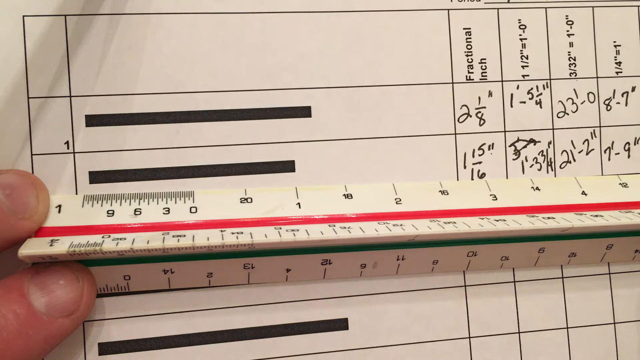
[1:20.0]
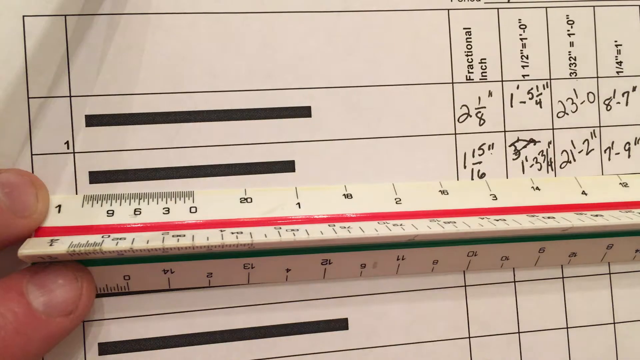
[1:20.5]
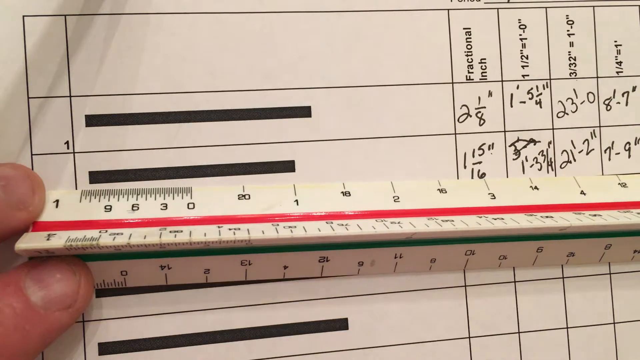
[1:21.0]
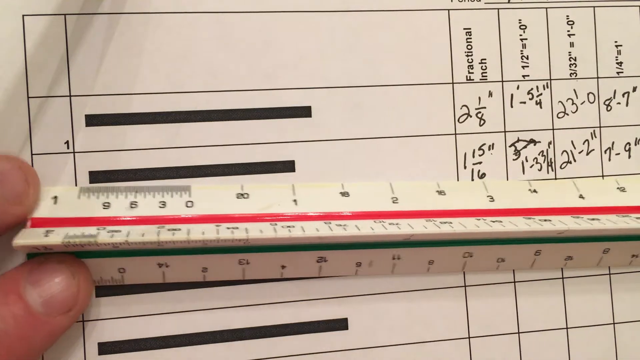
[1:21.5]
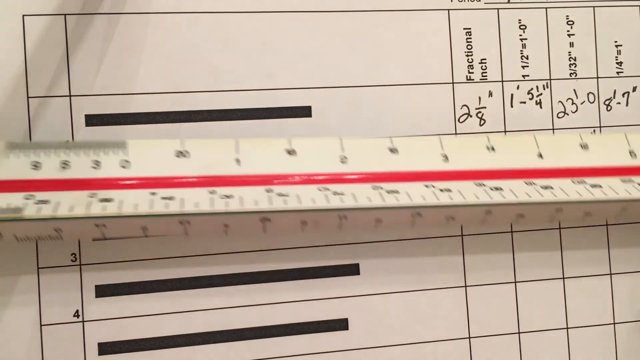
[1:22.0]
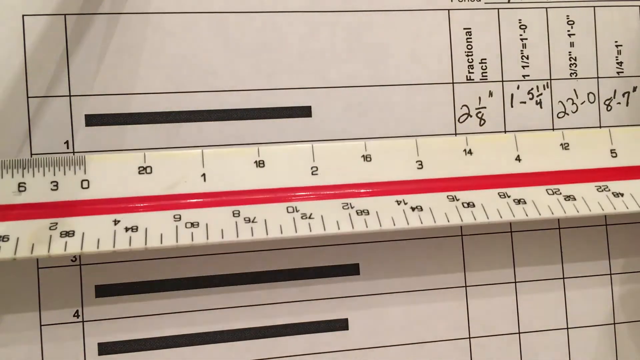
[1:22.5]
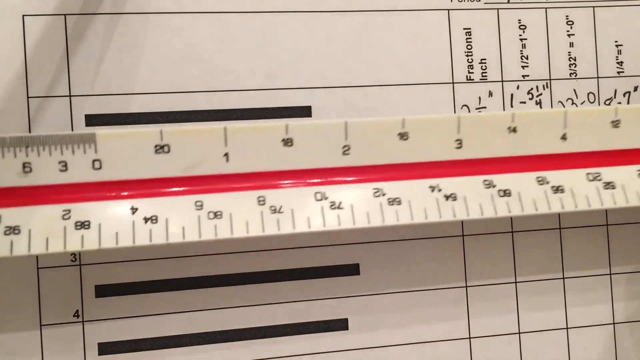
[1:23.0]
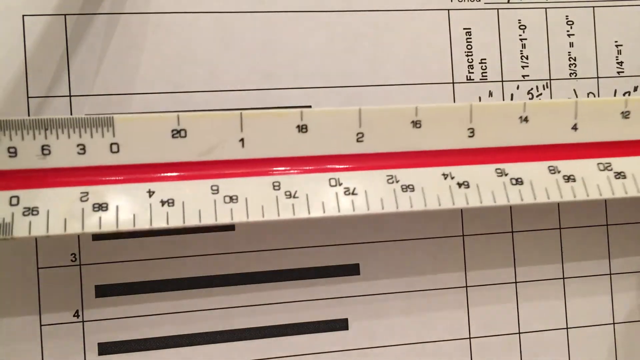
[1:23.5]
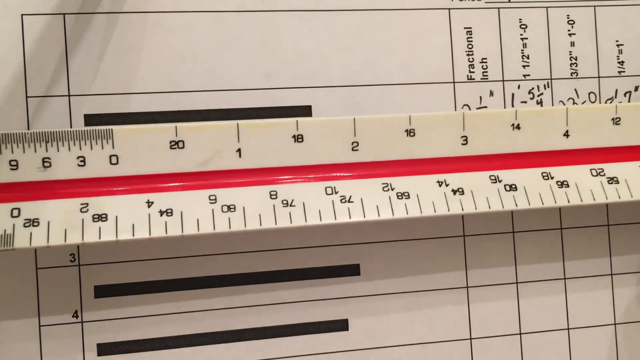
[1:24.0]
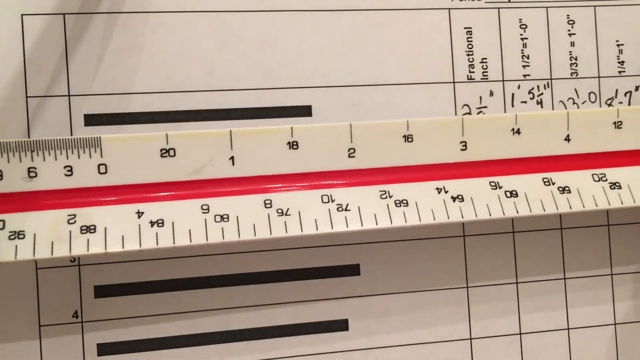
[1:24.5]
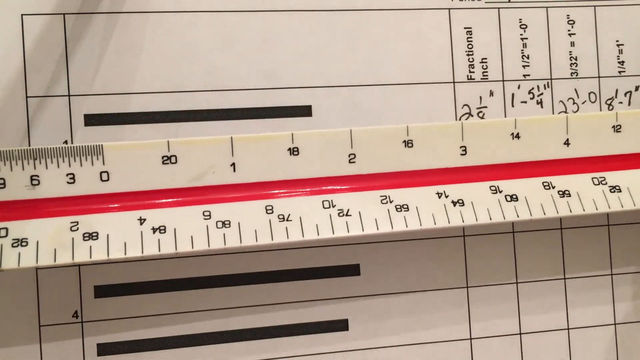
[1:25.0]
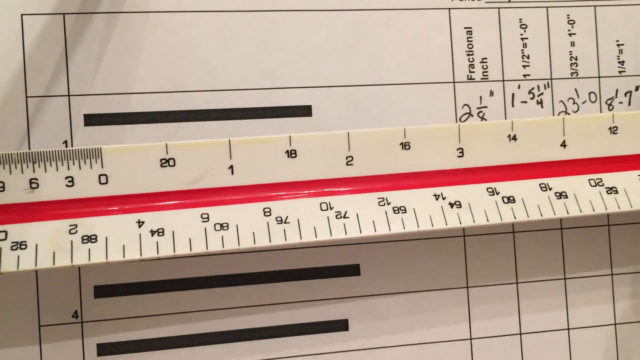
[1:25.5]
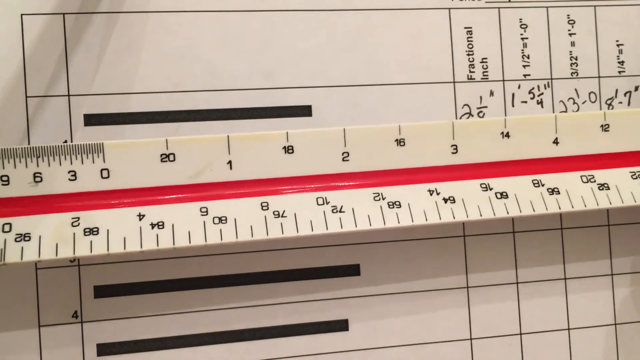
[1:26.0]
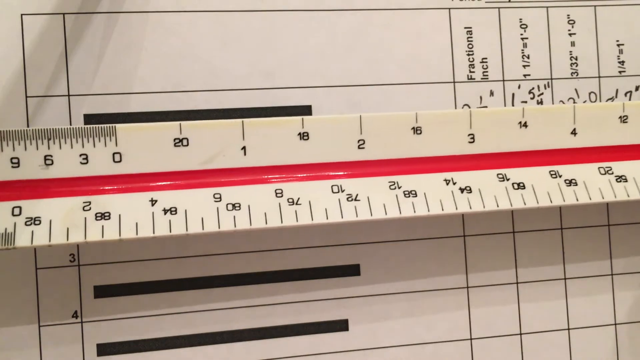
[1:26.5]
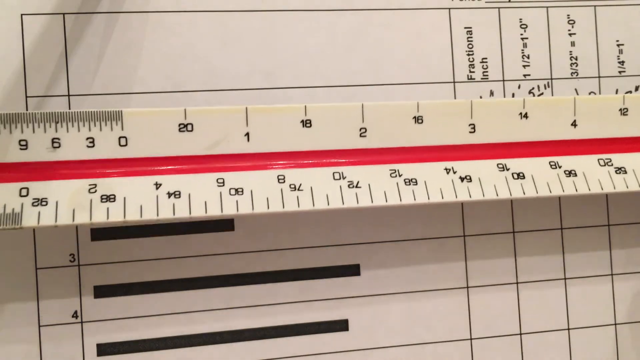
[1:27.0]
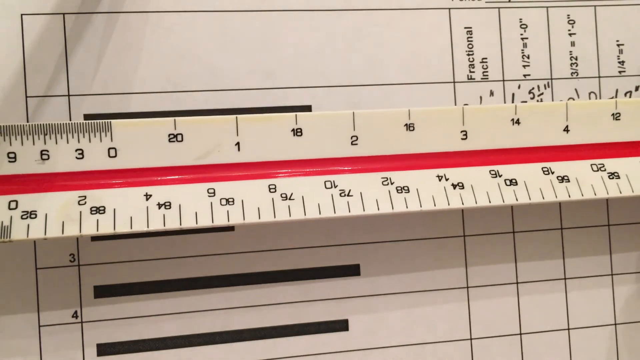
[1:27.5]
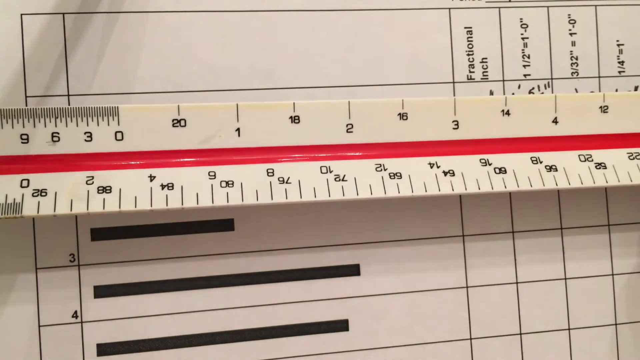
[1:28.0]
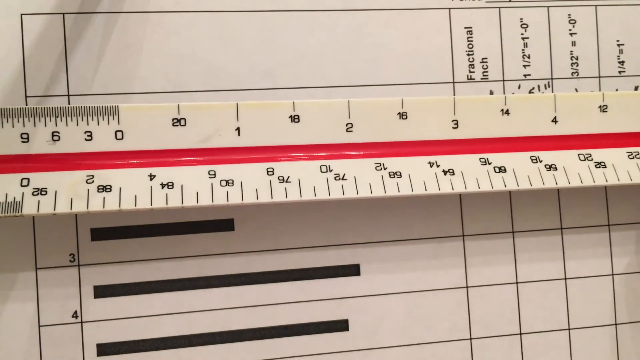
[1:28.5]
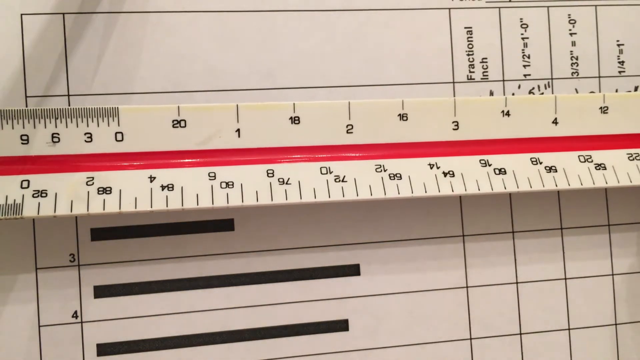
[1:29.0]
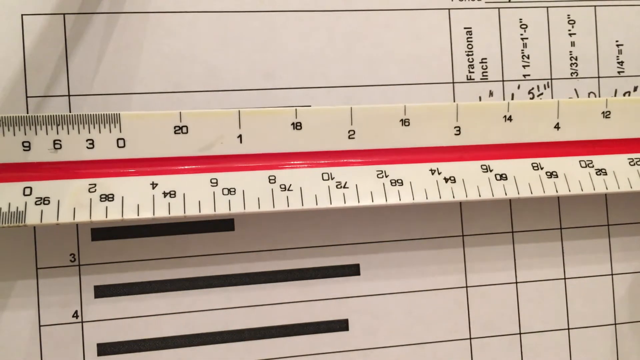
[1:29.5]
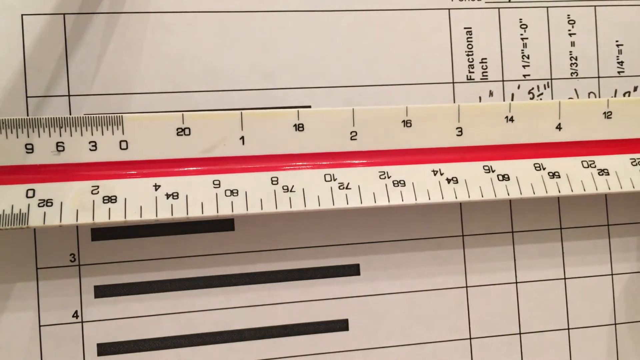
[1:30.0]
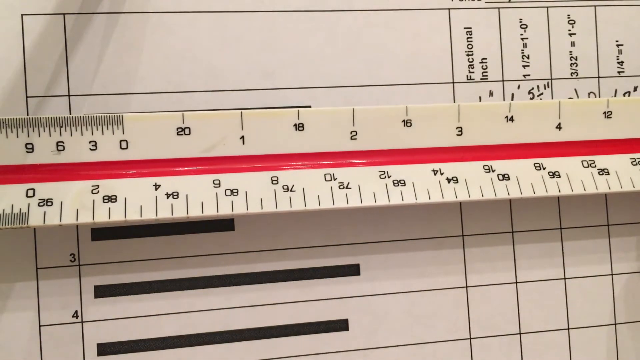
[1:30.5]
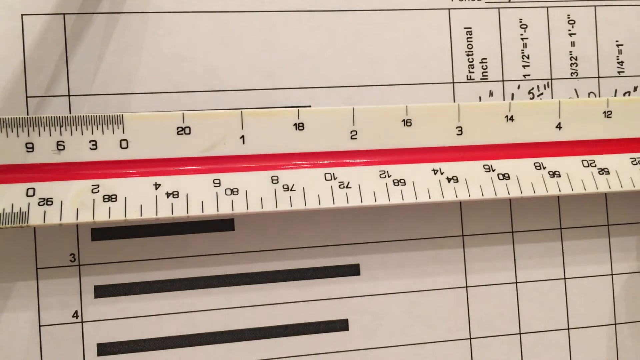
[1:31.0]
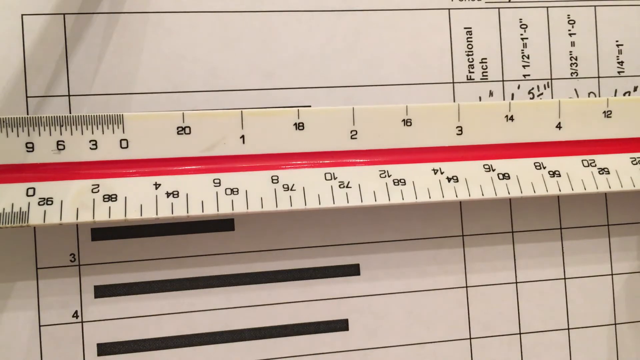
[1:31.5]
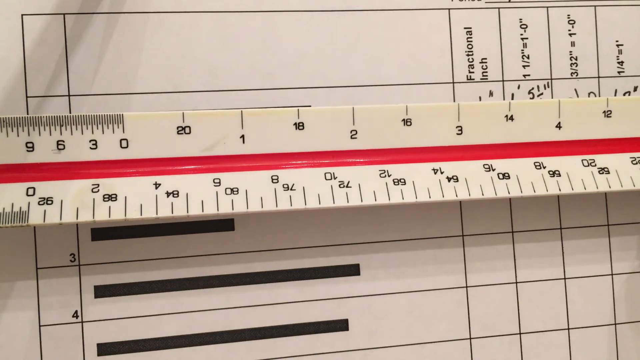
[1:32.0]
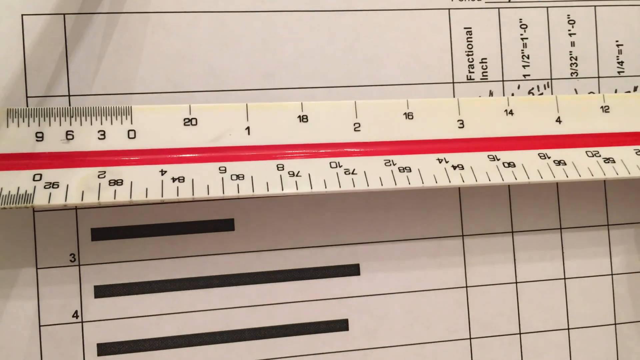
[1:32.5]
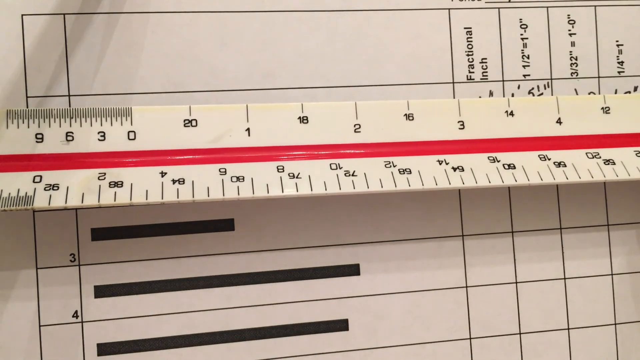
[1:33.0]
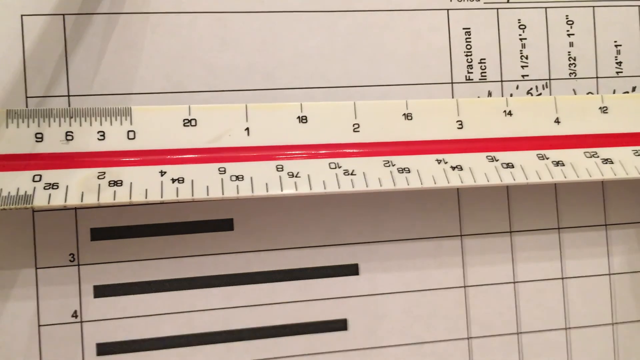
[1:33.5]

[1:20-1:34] The man continues measuring the lines, then tips the ruler upward toward the viewer so the whole ruler is visible with its black lines. The red lines have a sort of highlighted look and are not completely solid, possibly because the ruler is triangular and goes inward, leaving a visible crease in the middle. He looks over the different parts of the ruler, in what is probably a final overview from the top.